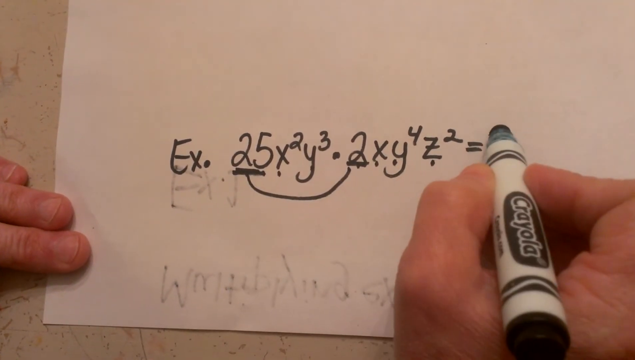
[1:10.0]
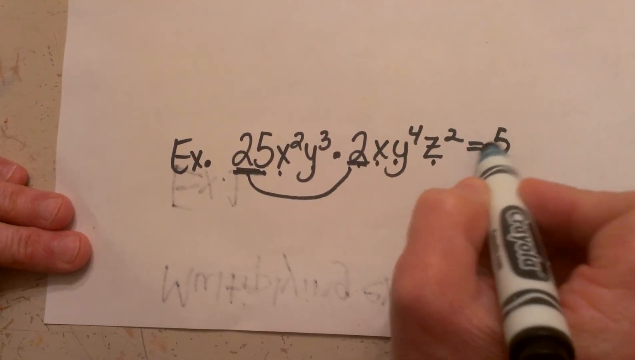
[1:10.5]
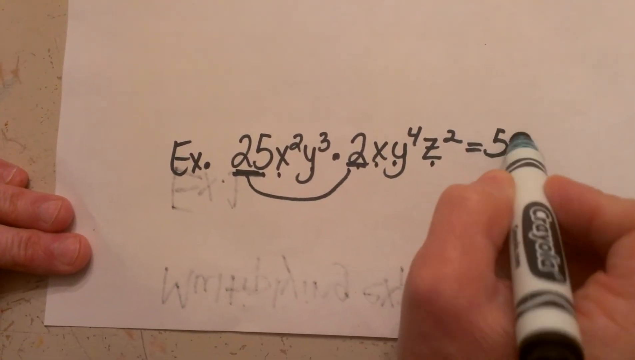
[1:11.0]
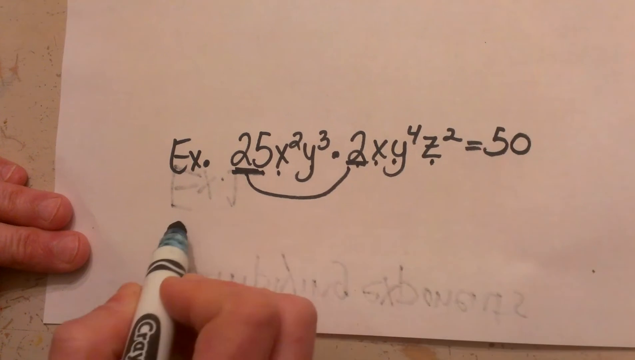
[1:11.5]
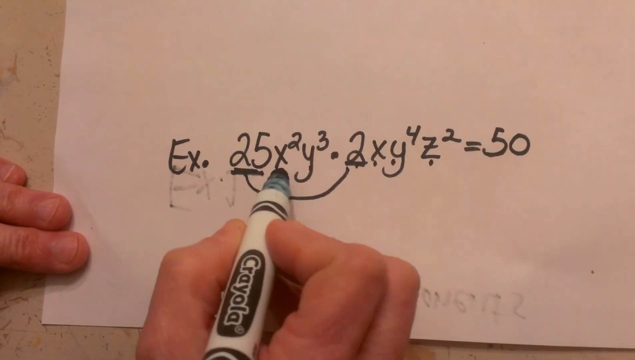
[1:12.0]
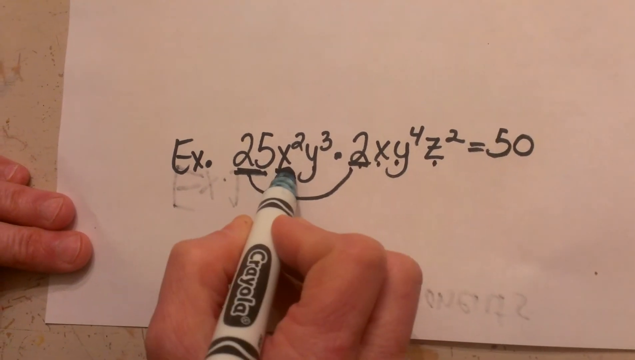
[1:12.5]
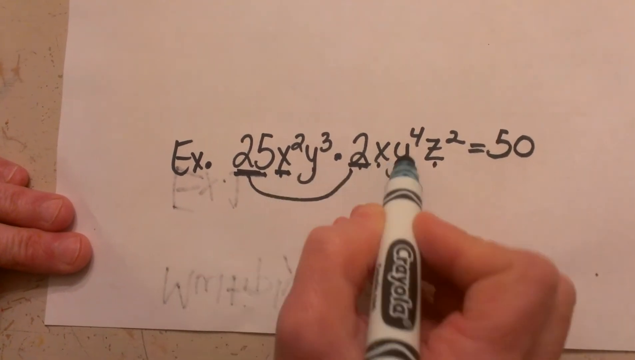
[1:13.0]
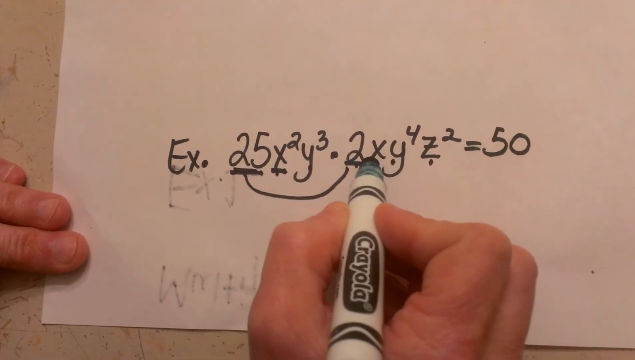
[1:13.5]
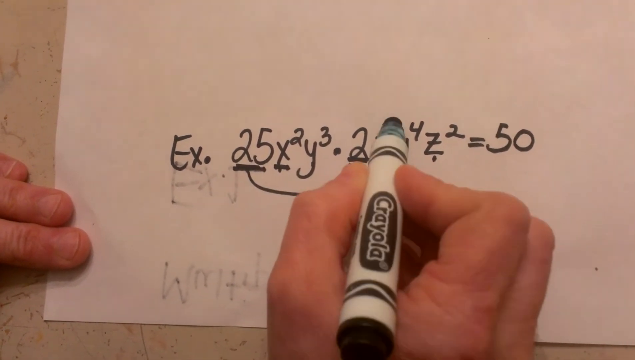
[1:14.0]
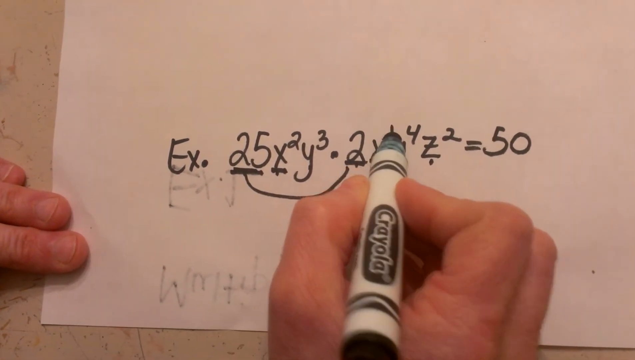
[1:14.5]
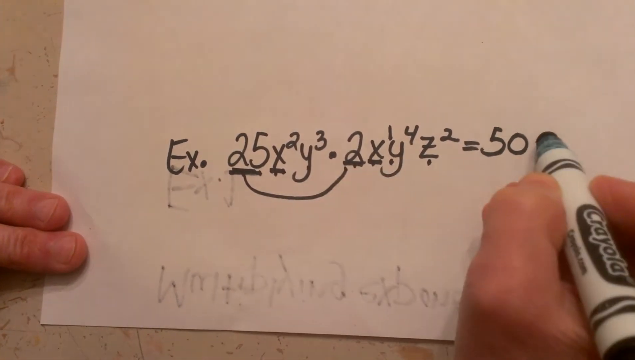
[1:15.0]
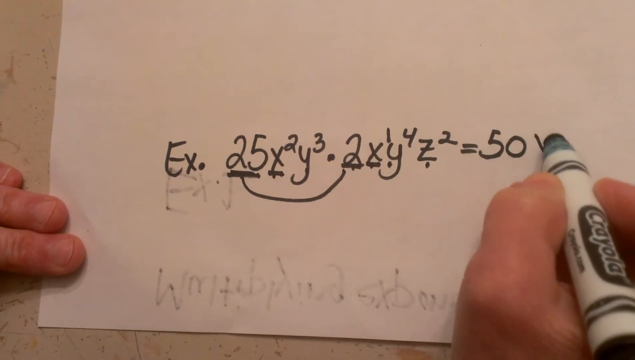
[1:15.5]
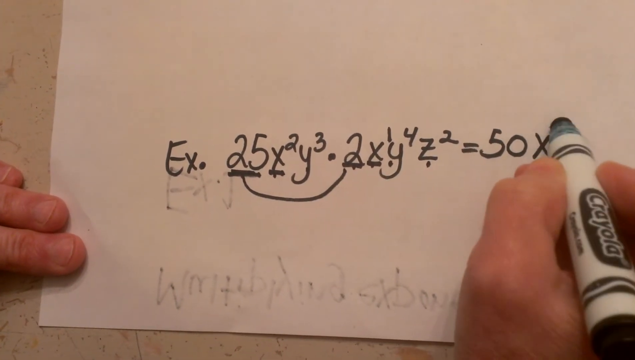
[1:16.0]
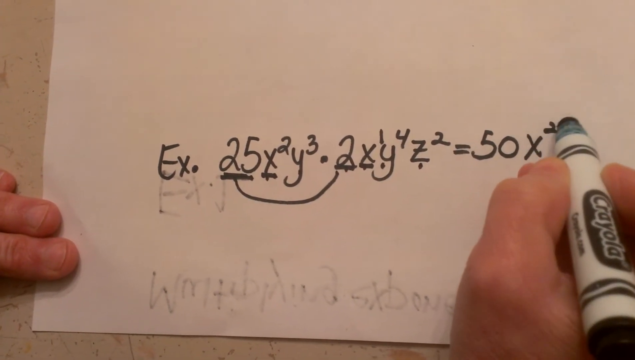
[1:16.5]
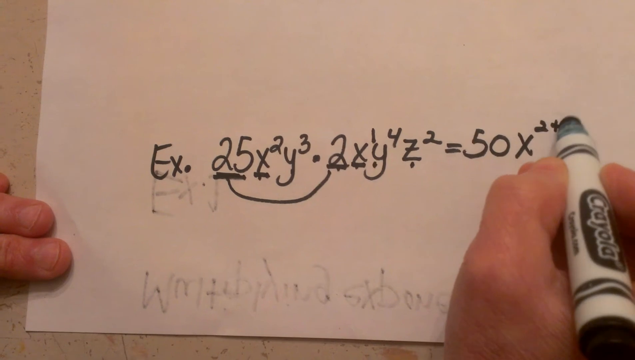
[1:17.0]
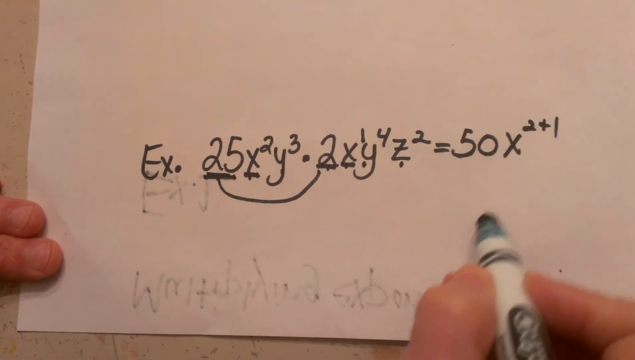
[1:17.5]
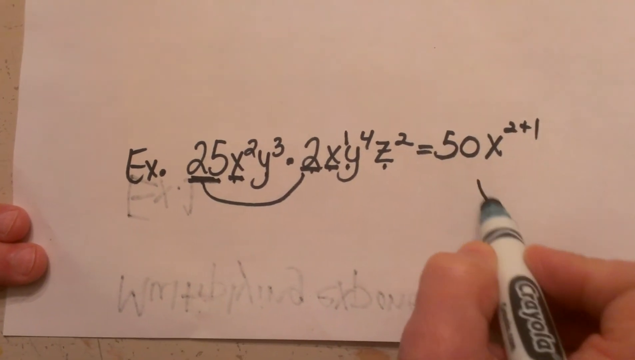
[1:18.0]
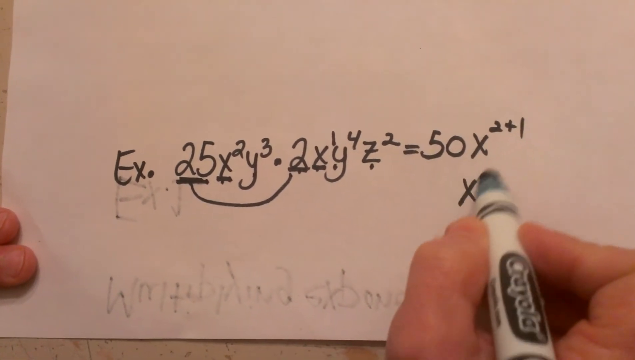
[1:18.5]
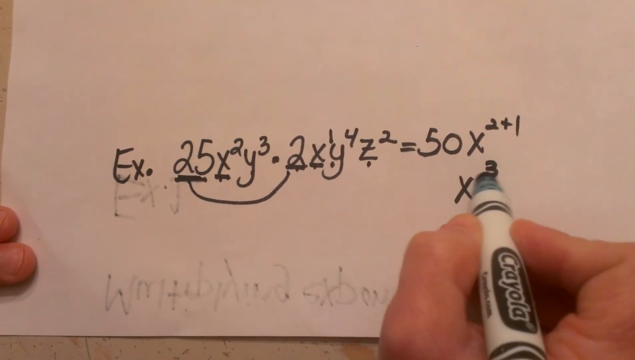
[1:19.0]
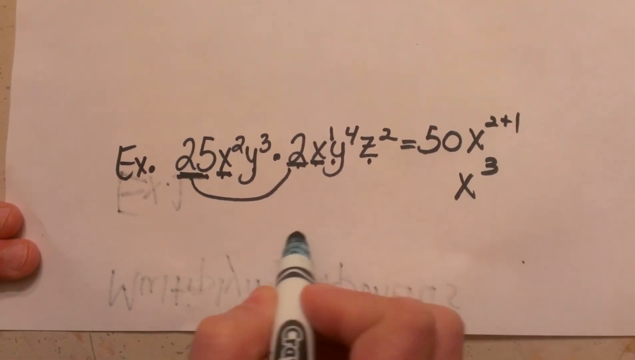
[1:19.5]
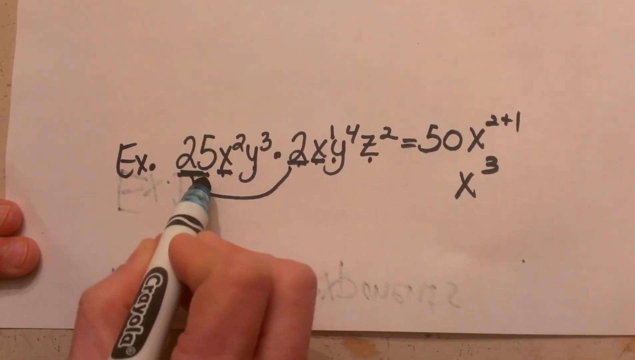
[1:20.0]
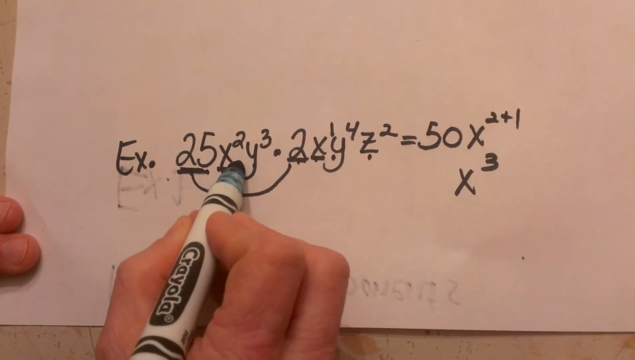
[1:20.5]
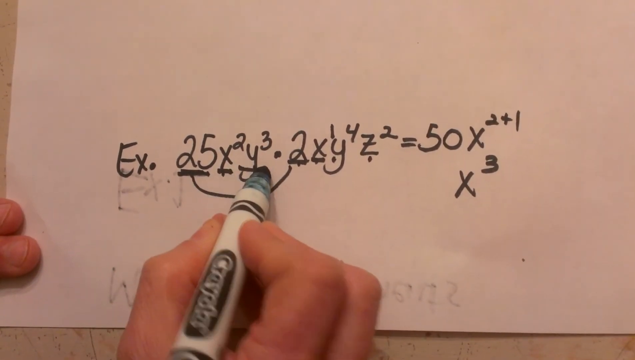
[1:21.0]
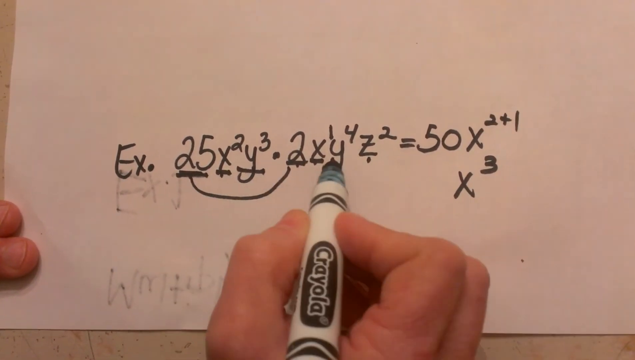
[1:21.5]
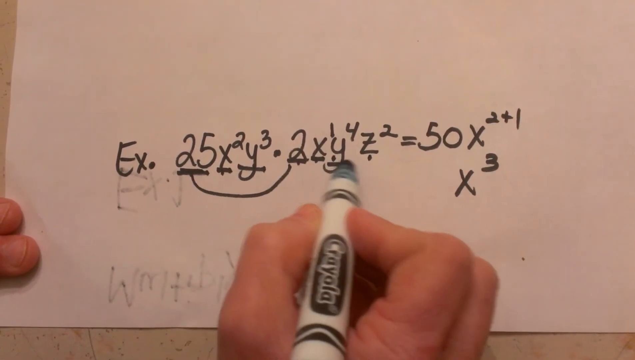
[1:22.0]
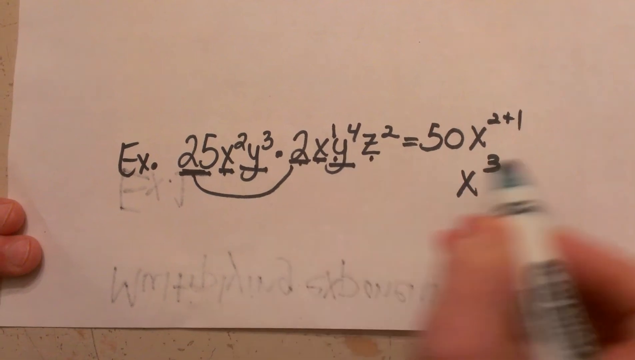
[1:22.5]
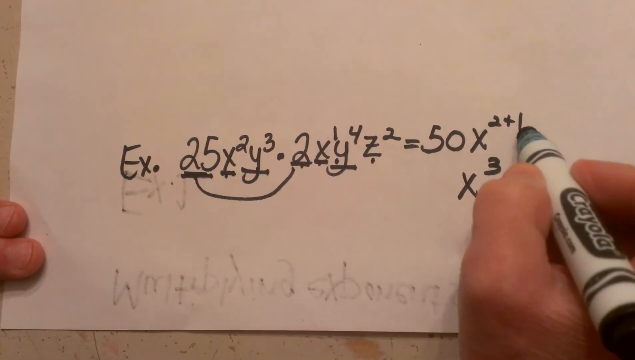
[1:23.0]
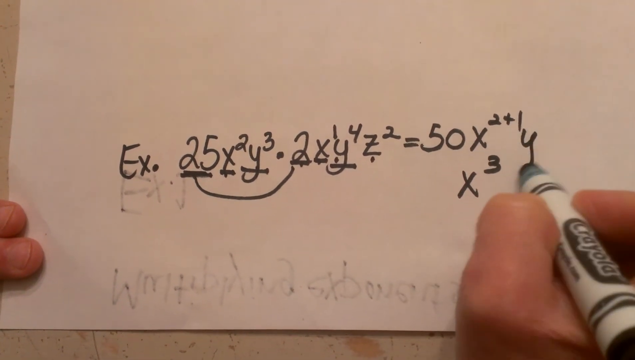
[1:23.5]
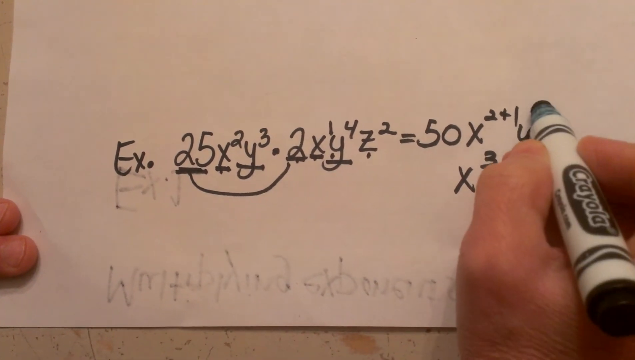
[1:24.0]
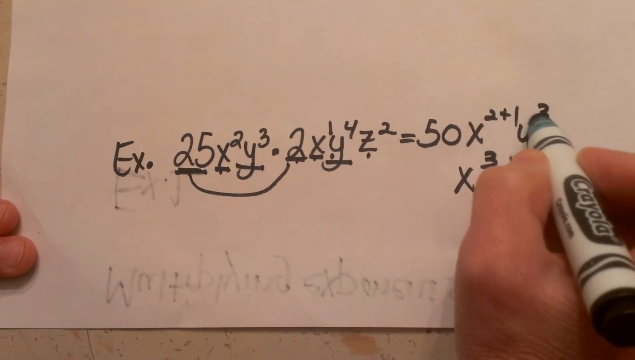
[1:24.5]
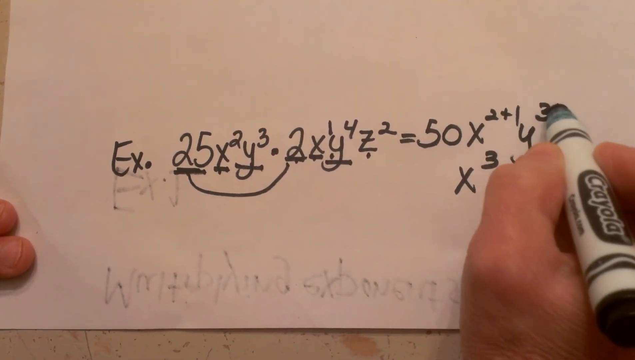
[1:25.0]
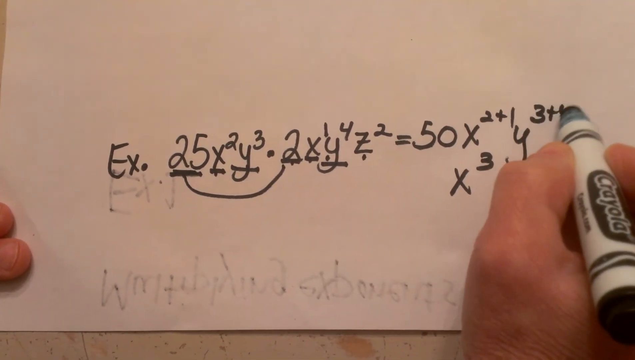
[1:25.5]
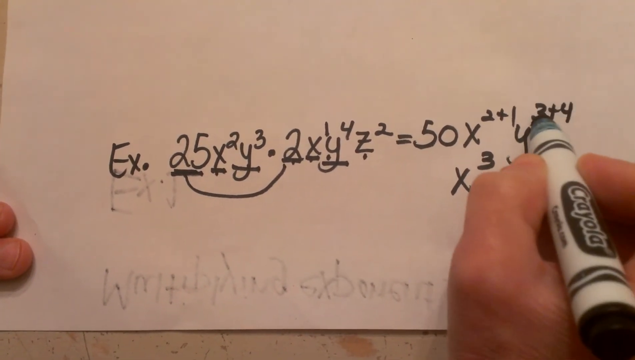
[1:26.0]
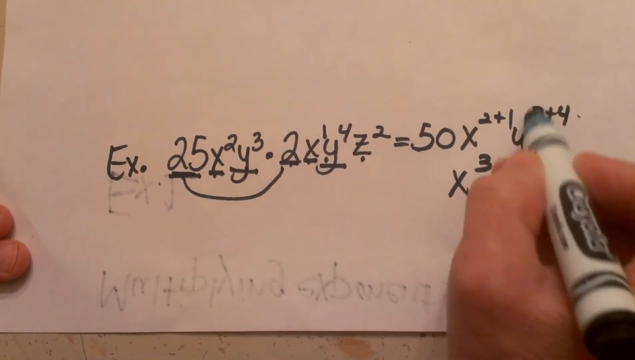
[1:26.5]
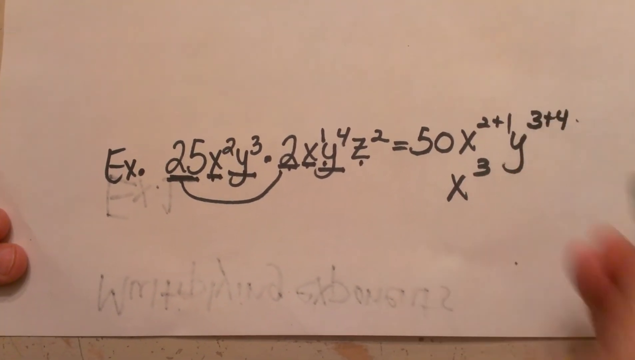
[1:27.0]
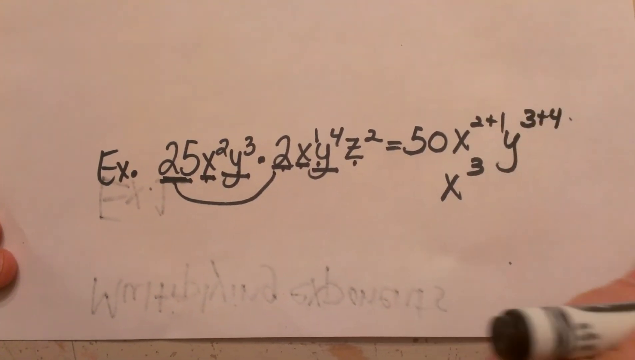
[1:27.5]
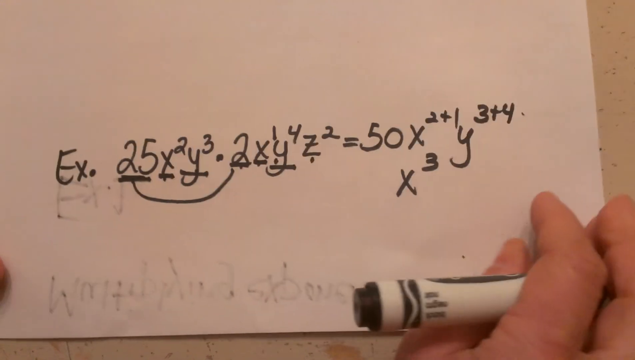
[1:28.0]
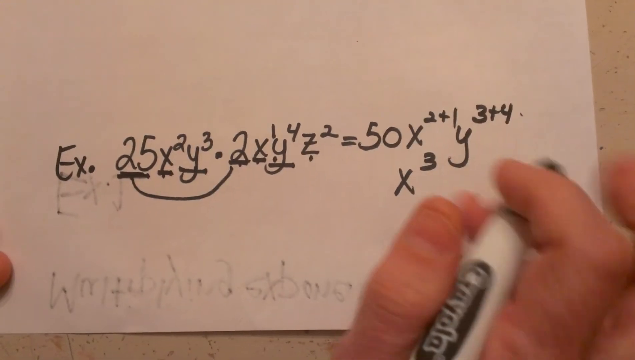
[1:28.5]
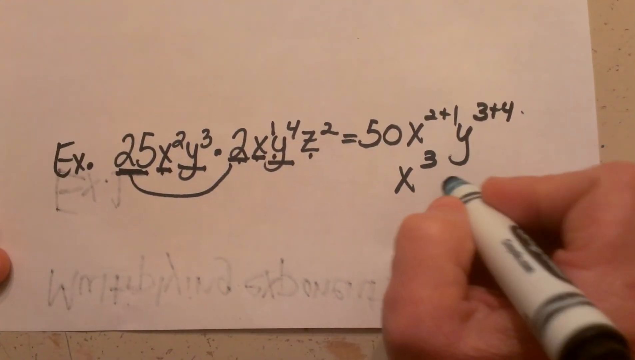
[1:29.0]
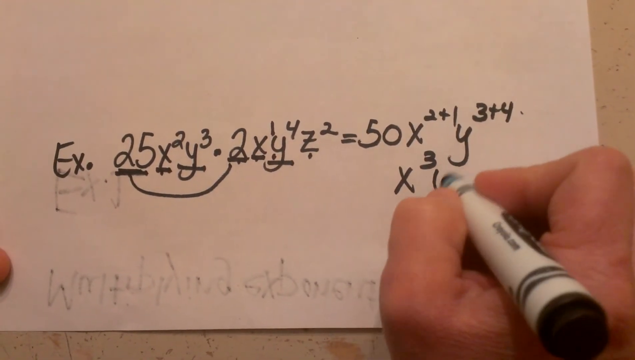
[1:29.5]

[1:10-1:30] The facilitator multiplies 25 by 2 to get 50. He then adds the exponents of the x terms, 2 plus 1, to get x exponent 3, and the exponents of y, 3 plus 4, to get y exponent 7.